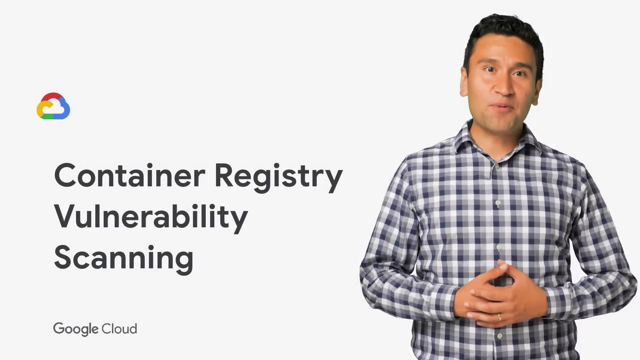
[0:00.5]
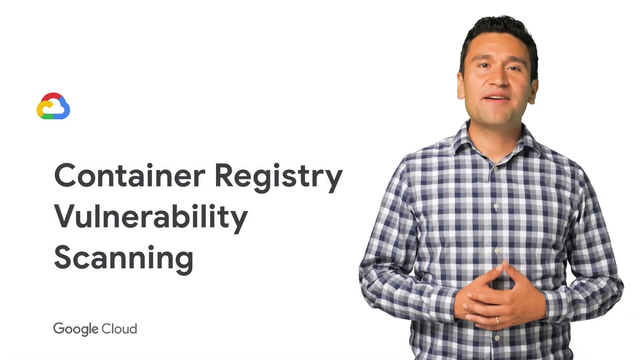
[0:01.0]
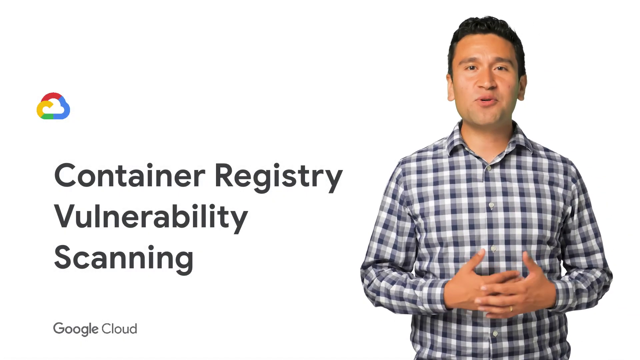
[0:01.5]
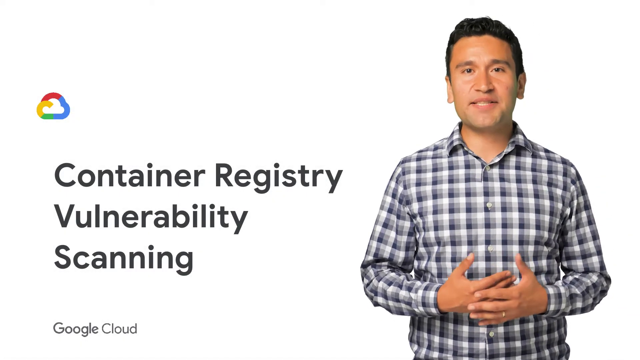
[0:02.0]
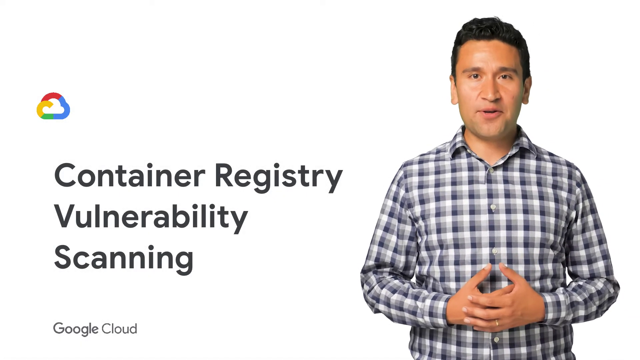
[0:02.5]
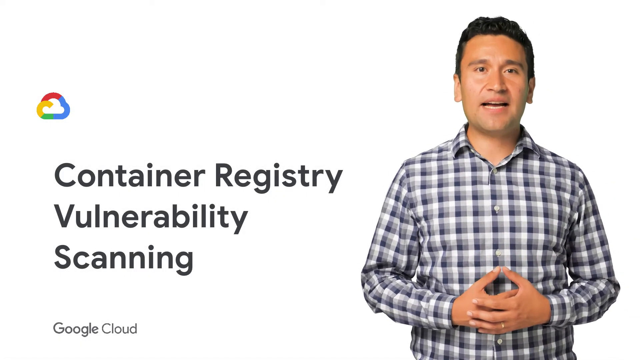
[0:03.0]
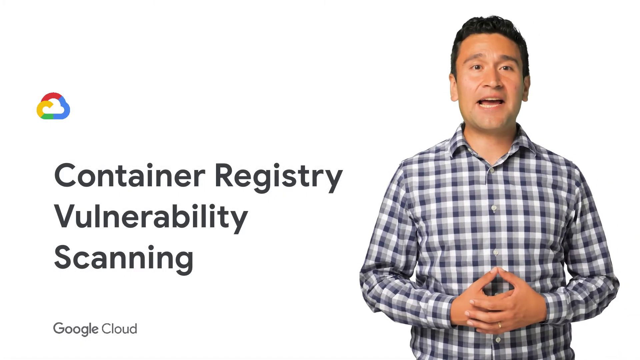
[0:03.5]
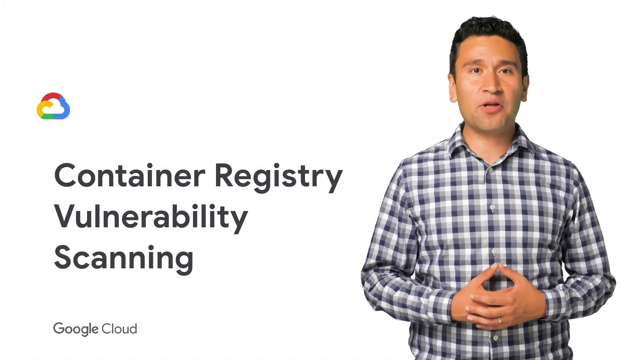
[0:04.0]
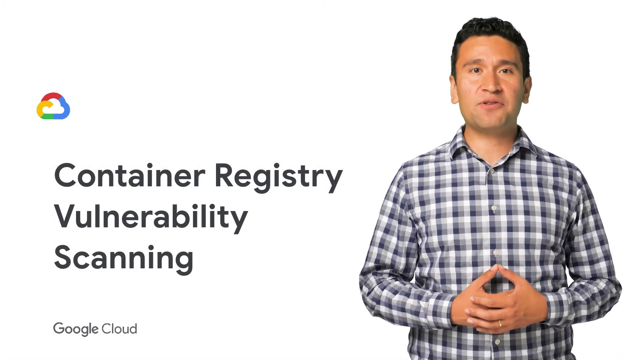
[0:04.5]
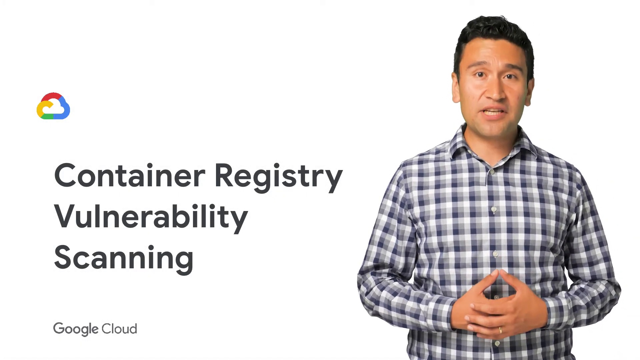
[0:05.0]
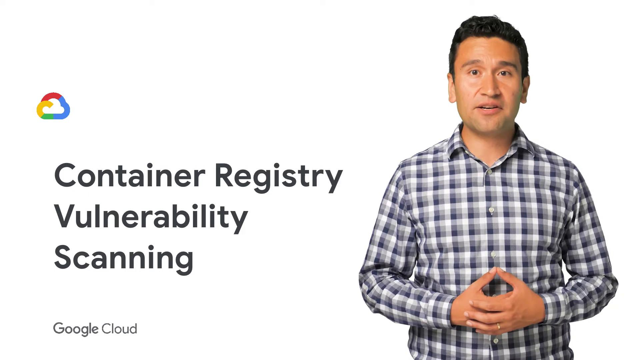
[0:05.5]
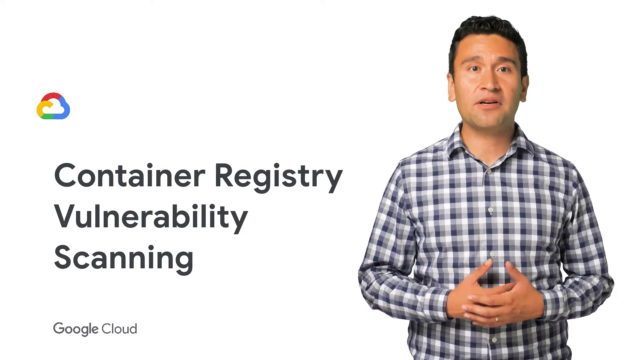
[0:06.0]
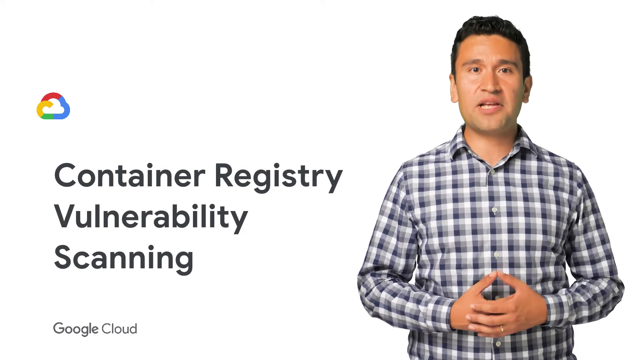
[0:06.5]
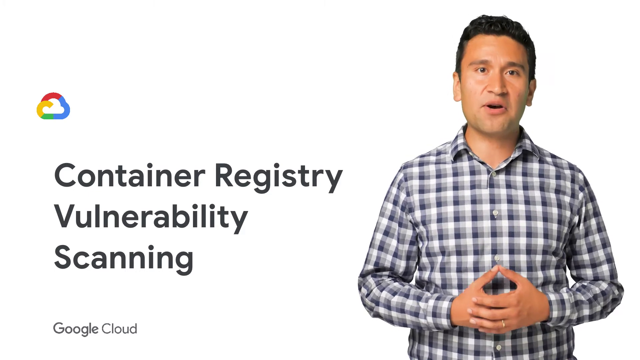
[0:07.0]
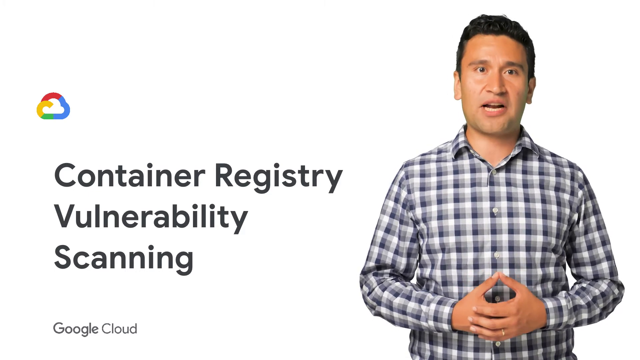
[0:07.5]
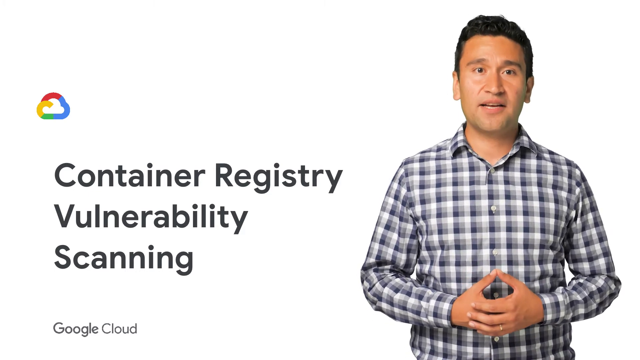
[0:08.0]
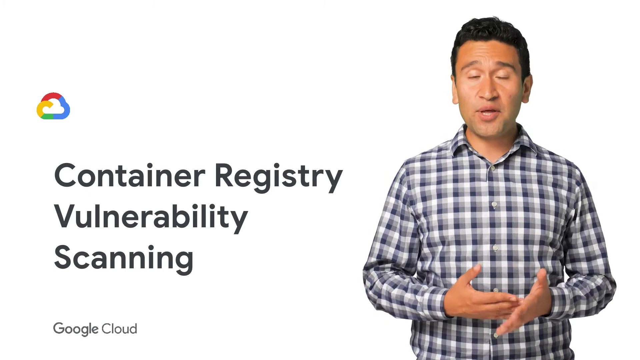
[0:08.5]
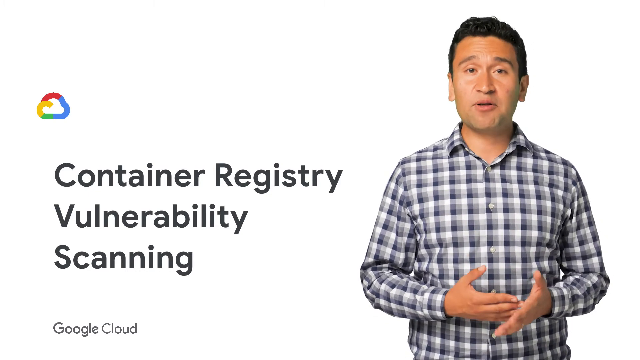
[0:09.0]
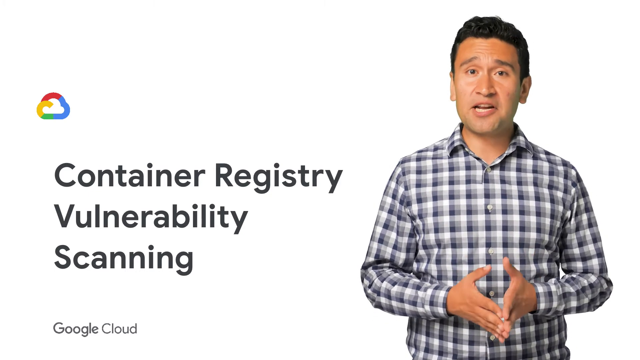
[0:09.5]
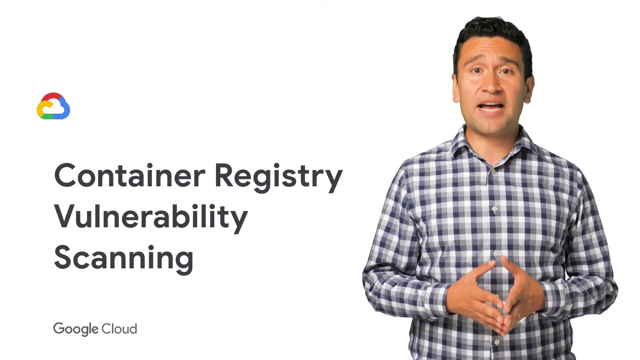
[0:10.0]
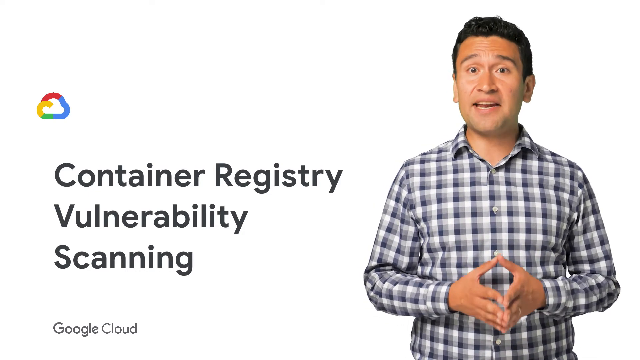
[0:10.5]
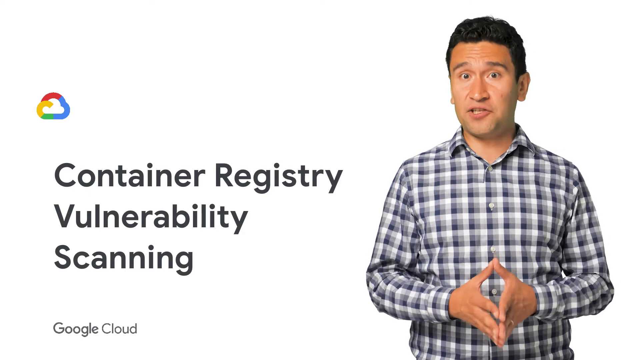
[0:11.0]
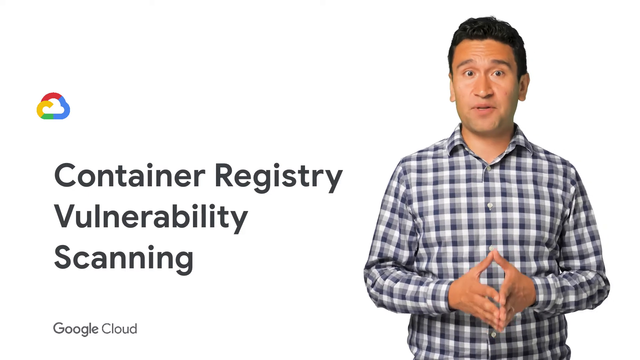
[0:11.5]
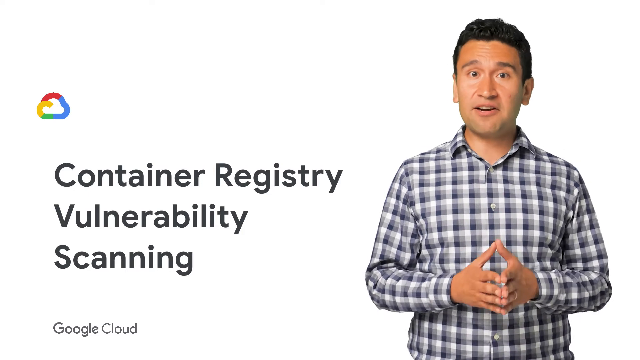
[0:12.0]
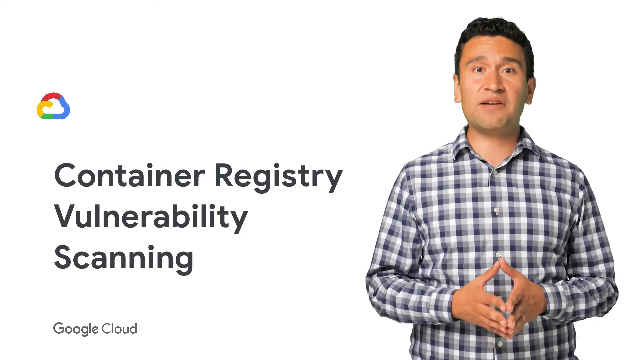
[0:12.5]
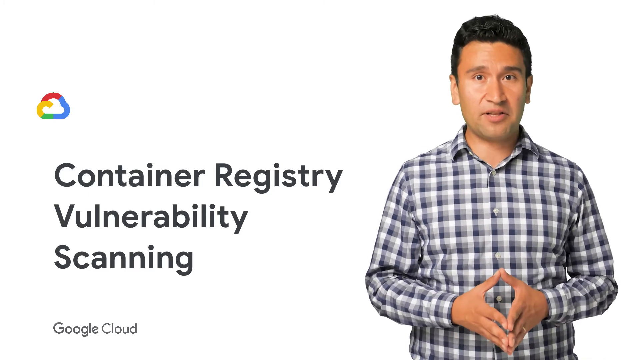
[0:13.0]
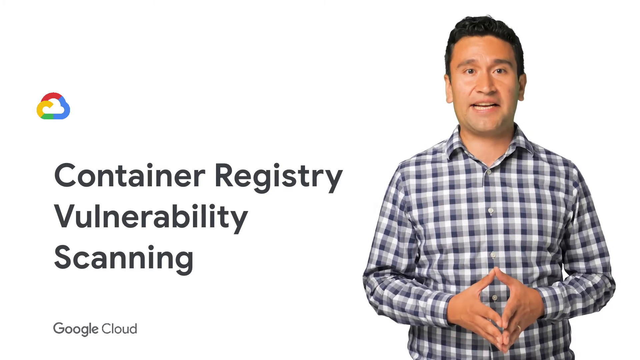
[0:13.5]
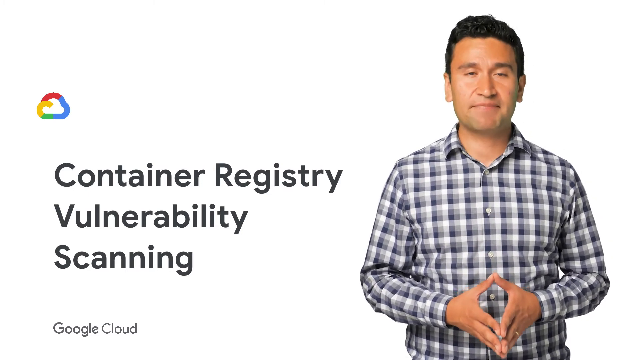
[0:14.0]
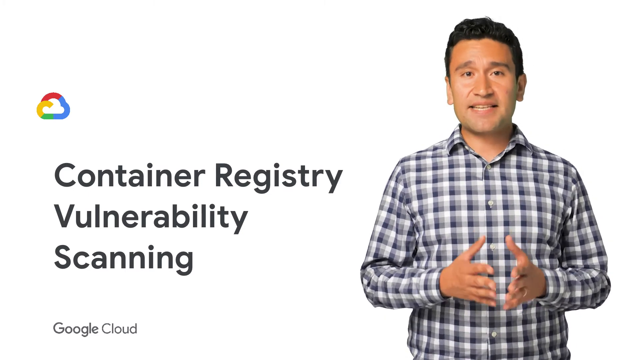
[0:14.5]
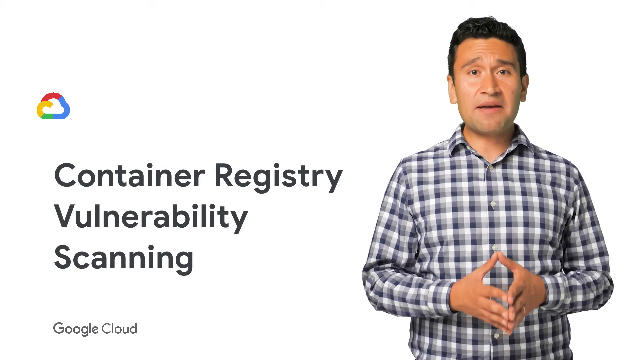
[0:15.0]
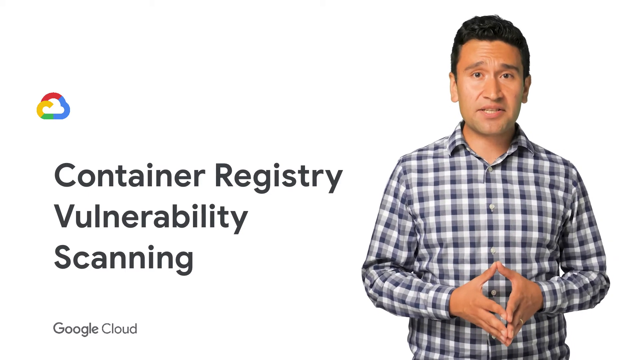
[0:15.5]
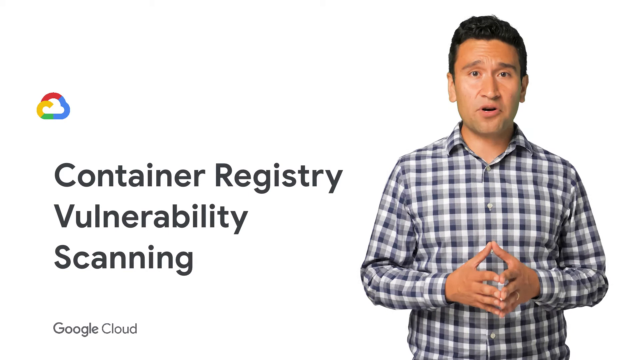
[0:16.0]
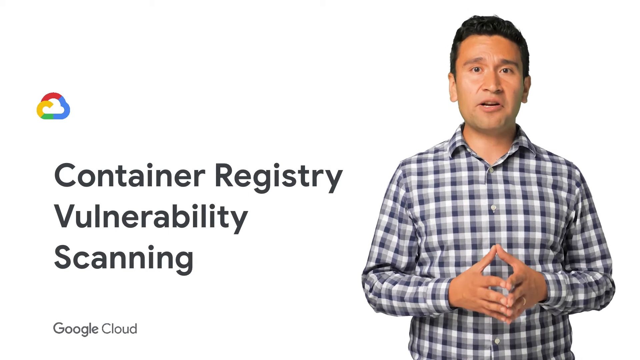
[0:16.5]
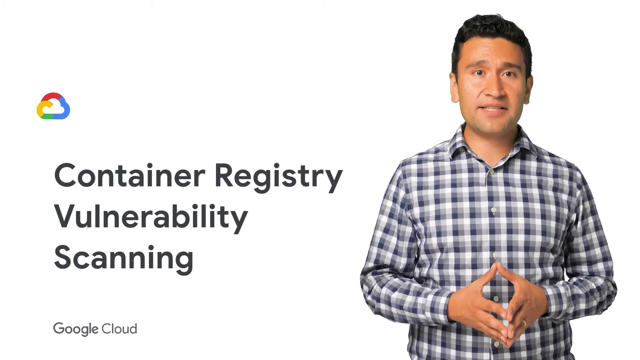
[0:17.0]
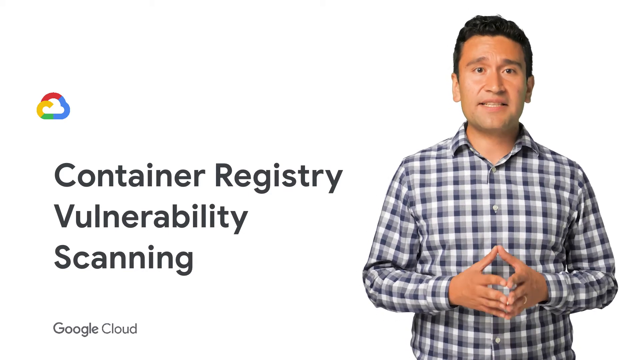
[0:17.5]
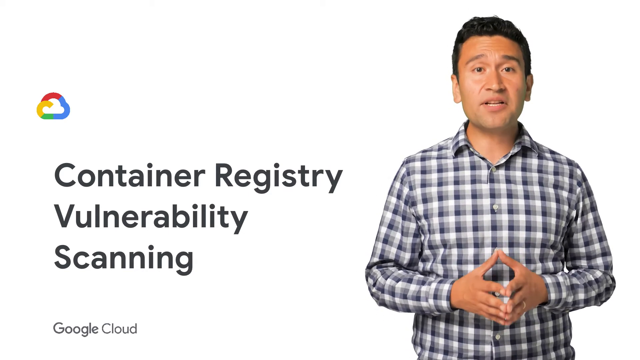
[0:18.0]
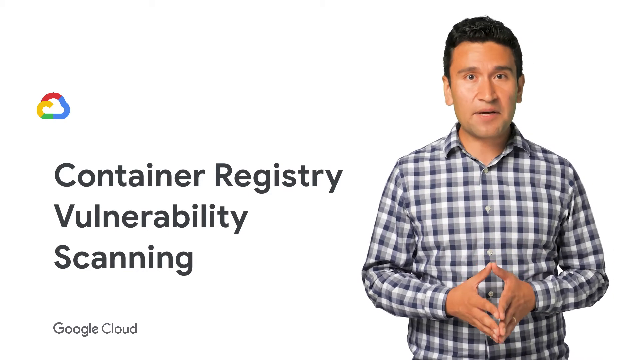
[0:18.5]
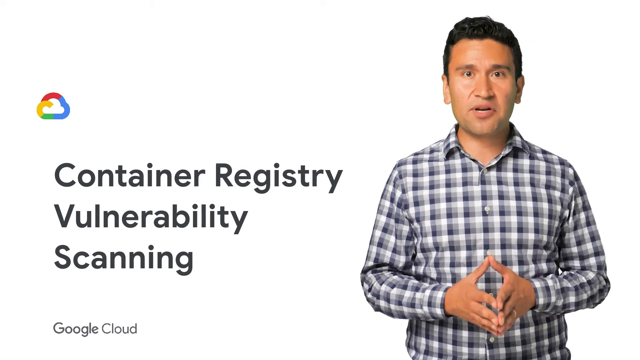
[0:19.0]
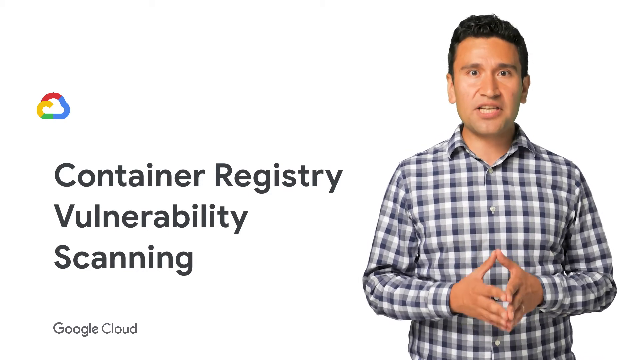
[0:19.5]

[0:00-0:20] The video opens on a white background. On the left side is a small logo, the hollow outline of a cloud in rainbow colors, and underneath it black, blocky text reads "Container Registry Vulnerability Scanning." On the right side, a man speaks, seen from about the waist up. He has short dark brown hair, wears a plaid button-up shirt, and looks directly at the camera with a neutral expression. He holds his hands in front of him and uses them slightly as he speaks, staying in the same spot and standing there as he talks. The text on the left never changes. The scene then fades to a black screen.